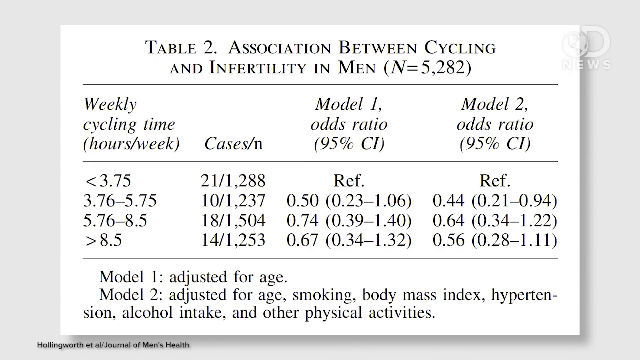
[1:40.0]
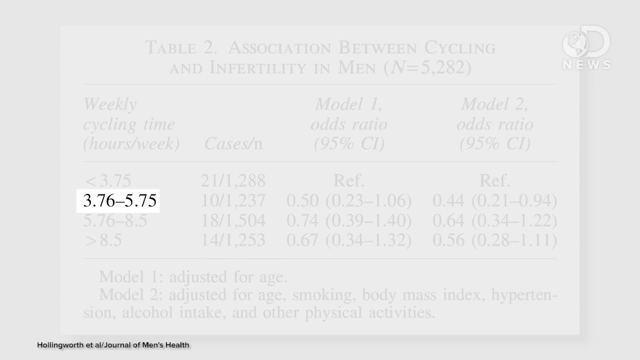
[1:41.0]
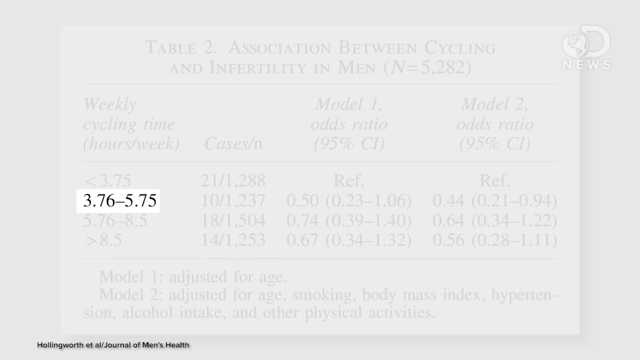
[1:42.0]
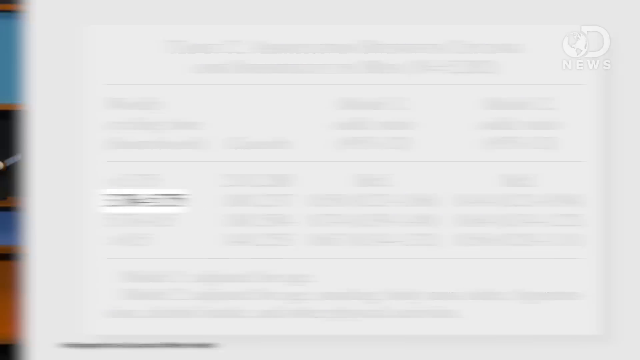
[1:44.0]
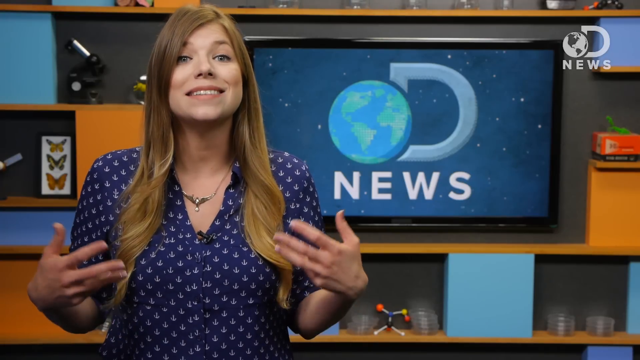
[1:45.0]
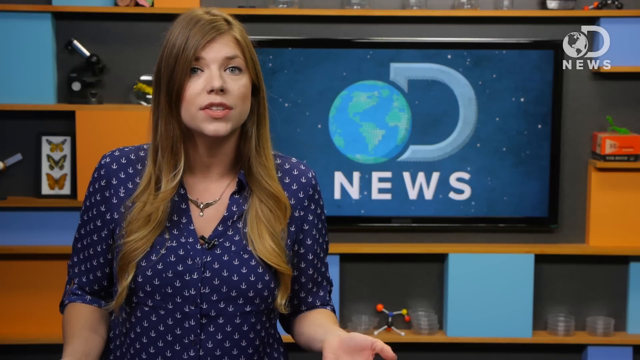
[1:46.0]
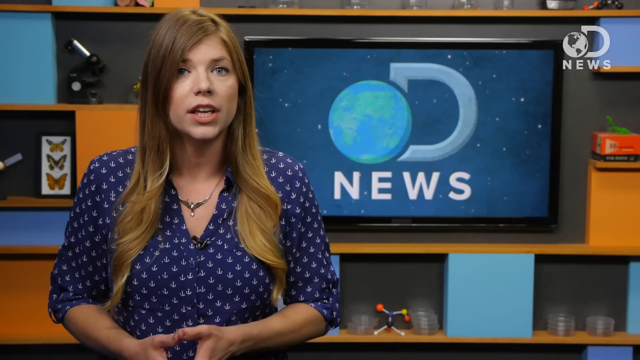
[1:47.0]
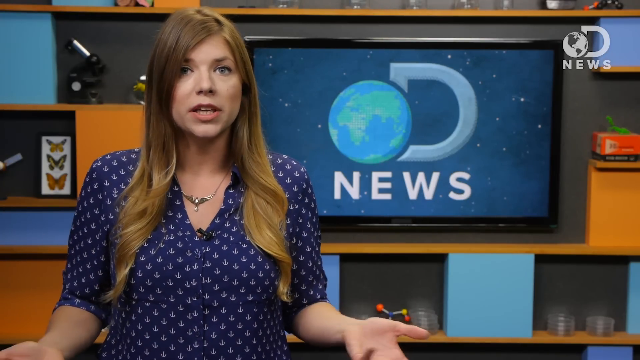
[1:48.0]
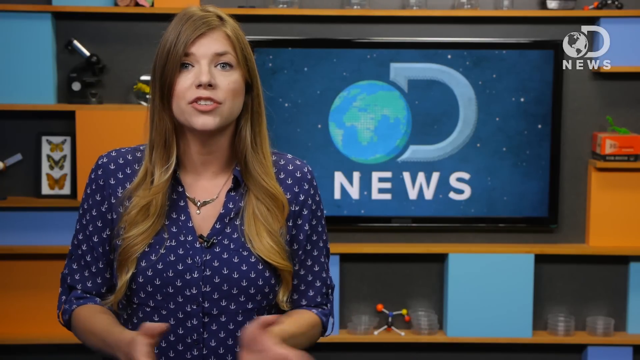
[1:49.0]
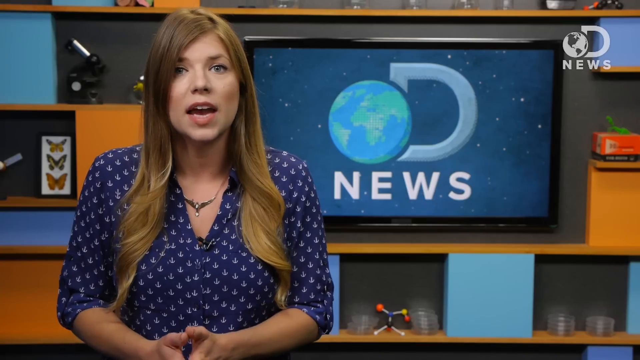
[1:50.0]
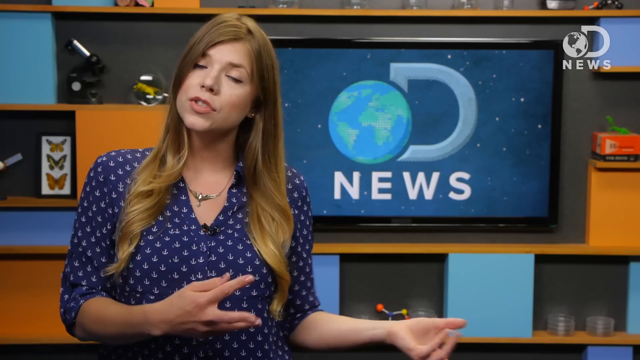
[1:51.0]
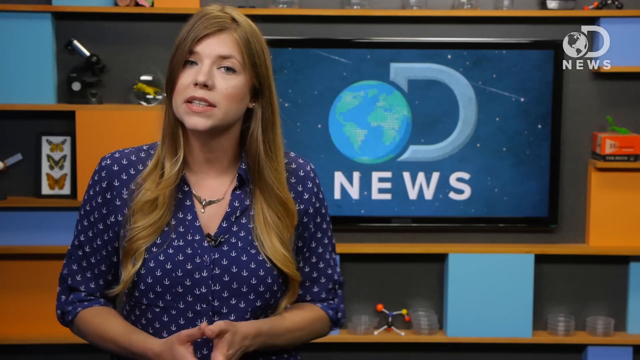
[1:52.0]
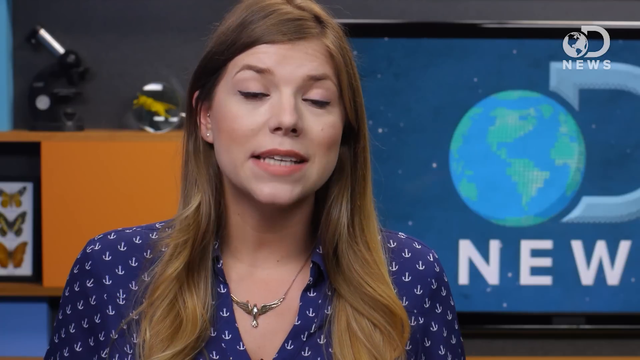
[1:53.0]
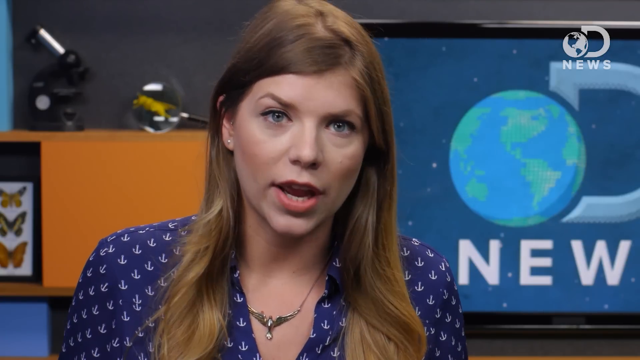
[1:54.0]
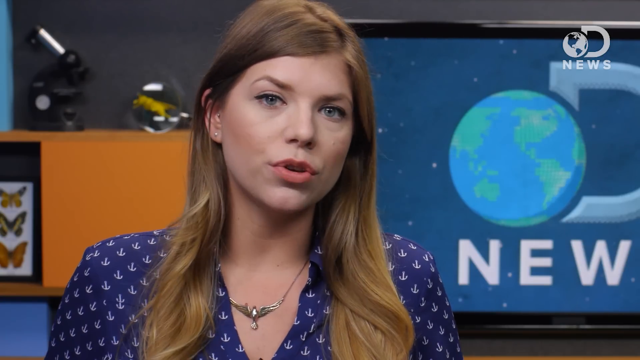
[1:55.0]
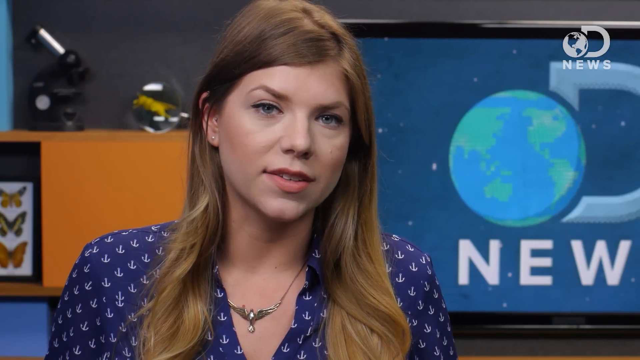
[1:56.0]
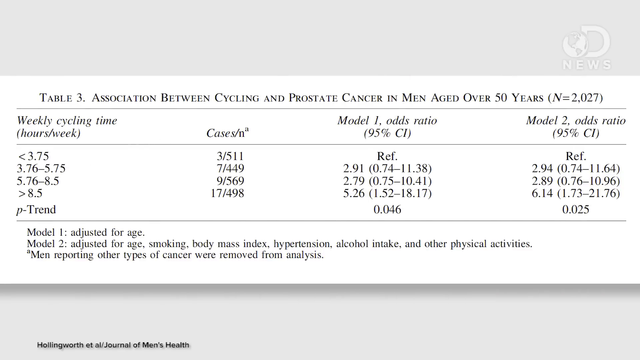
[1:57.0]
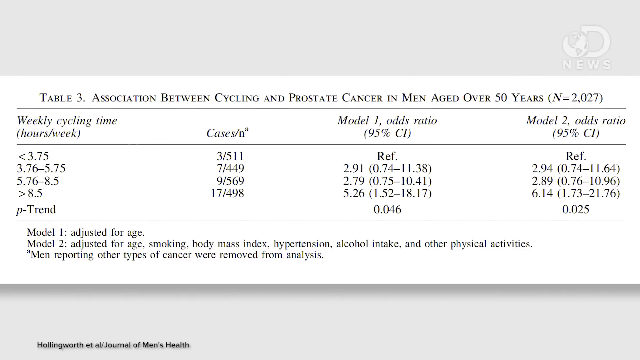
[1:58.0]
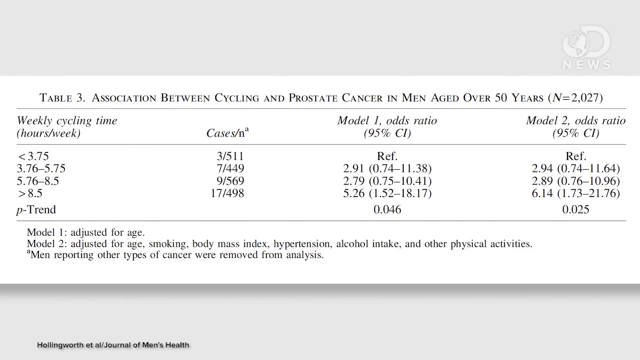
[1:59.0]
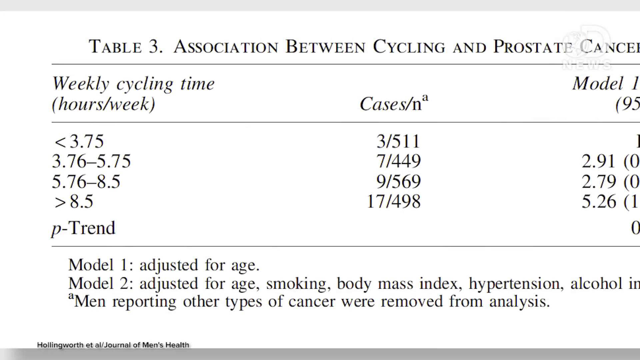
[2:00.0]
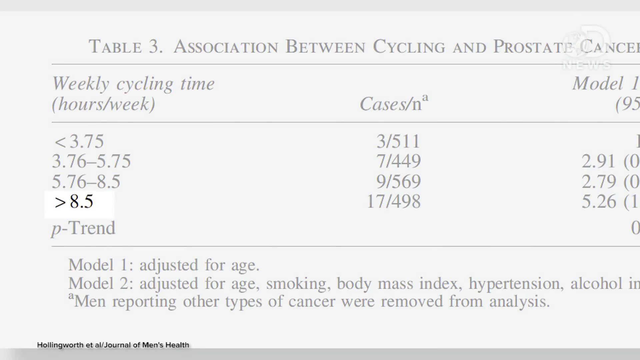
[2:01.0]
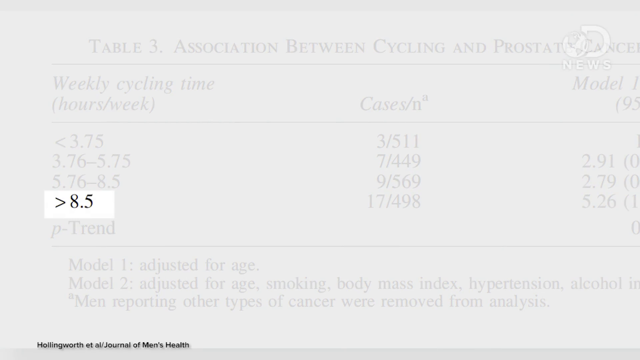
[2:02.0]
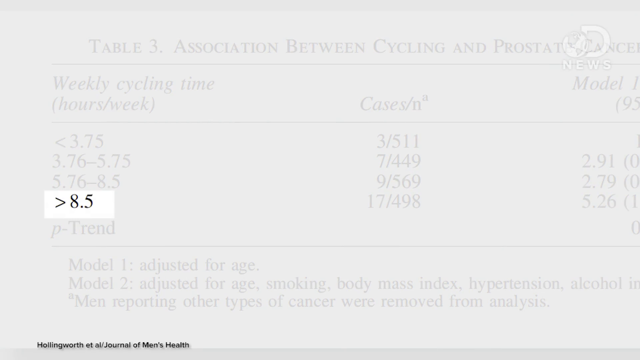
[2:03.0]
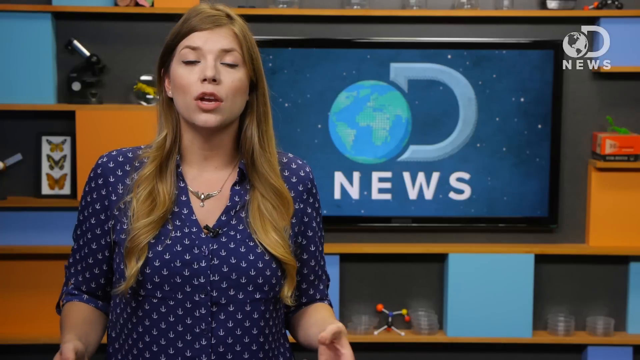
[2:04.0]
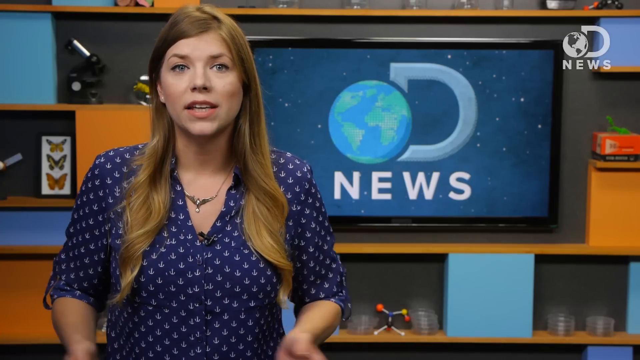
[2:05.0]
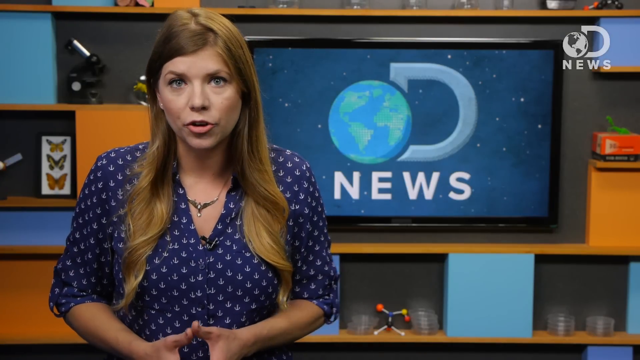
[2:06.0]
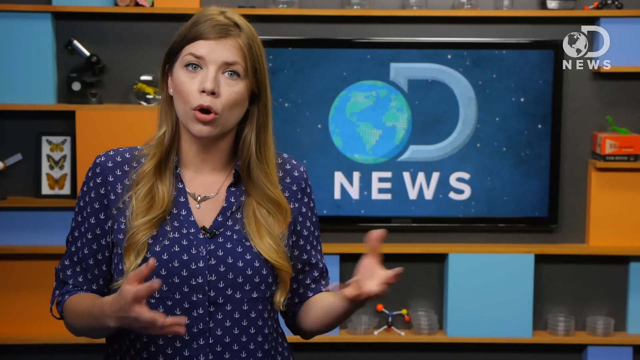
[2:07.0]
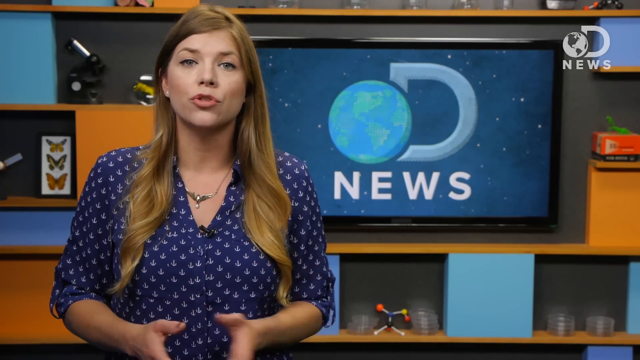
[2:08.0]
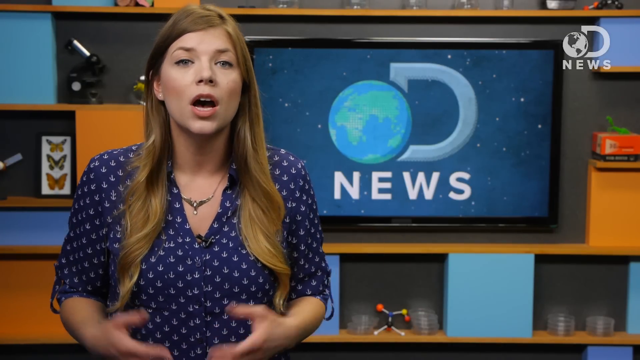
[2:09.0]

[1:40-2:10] Table 2 shows N = 5282, weekly cycling time in hours per week, cases, model 1 and model 2, with model 1 adjusted for age and model 2 adjusted for age, smoking, body mass index, hypertension, alcohol intake and other physical activities. The values 3.762 and 5.75 are highlighted. The woman, in a blue shirt and with long hair, talks very animatedly and waves her hands, with the screen showing Discovery News. Table 3 follows: "Association between cycling and prostate cancer in men aged over 50 years", N = 2027, with weekly cycling time, cases, model 1 and model 2 and the same adjustments, and the note "Men reporting other types of cancer were removed from analysis." In table 3, "greater than 8.5" is highlighted. The video returns to the woman speaking more animatedly.